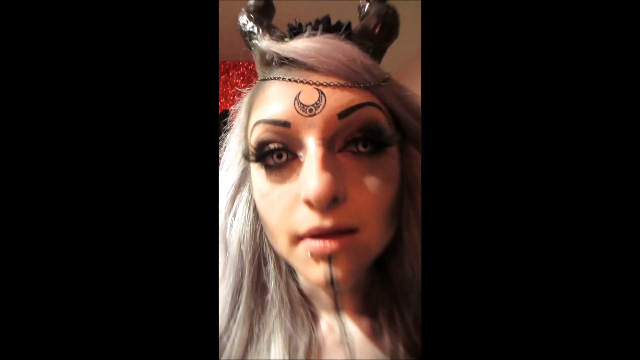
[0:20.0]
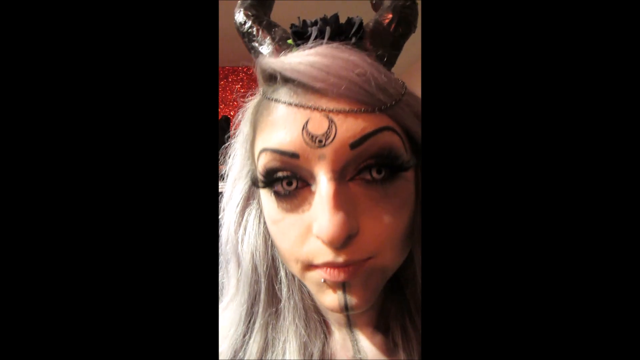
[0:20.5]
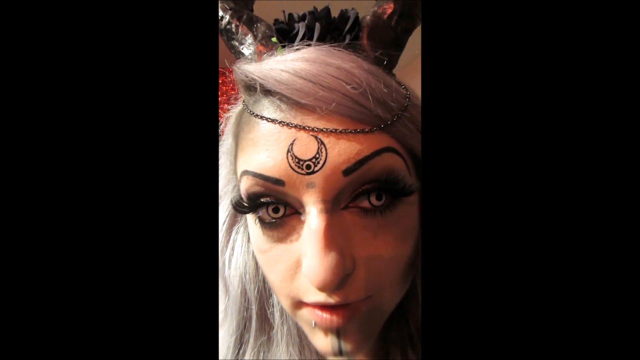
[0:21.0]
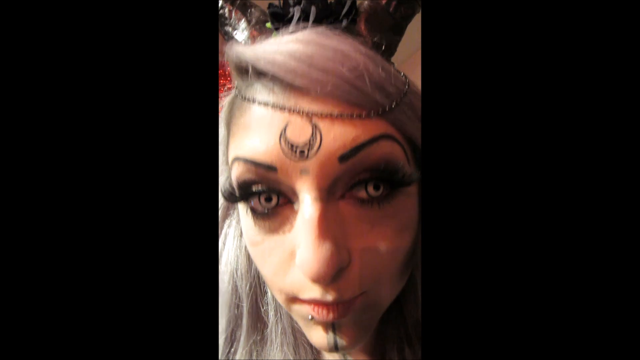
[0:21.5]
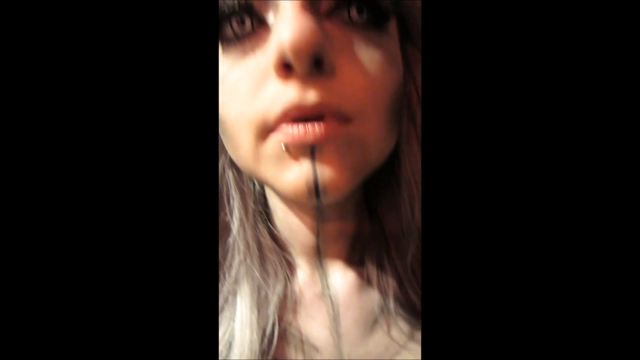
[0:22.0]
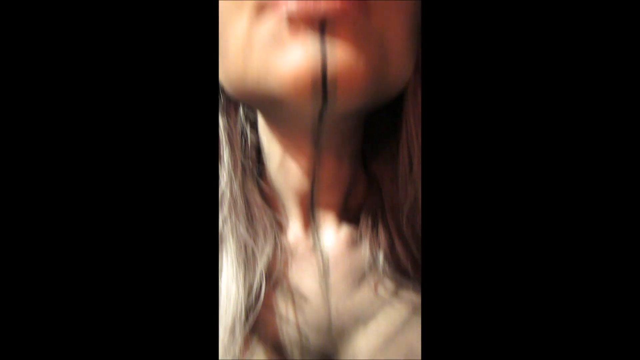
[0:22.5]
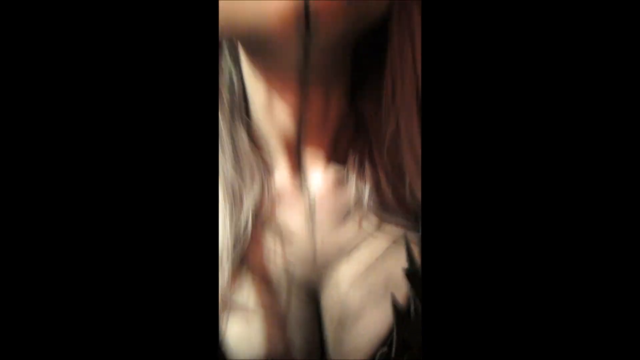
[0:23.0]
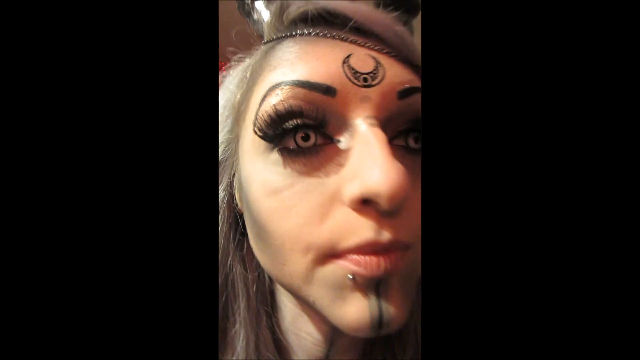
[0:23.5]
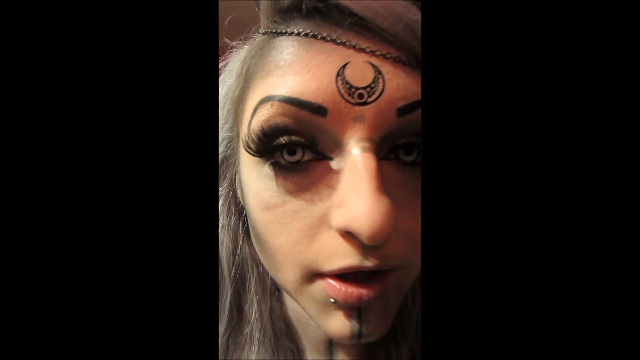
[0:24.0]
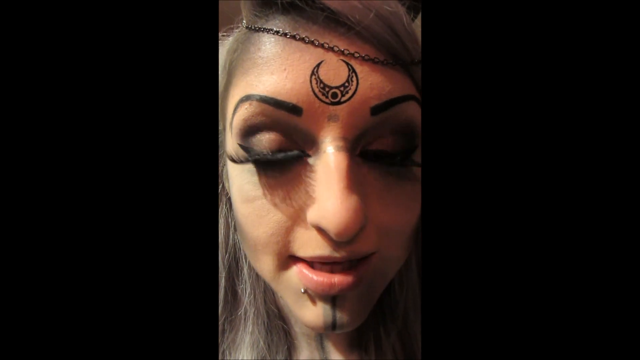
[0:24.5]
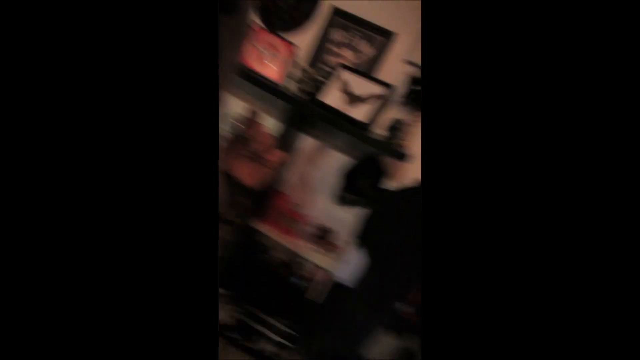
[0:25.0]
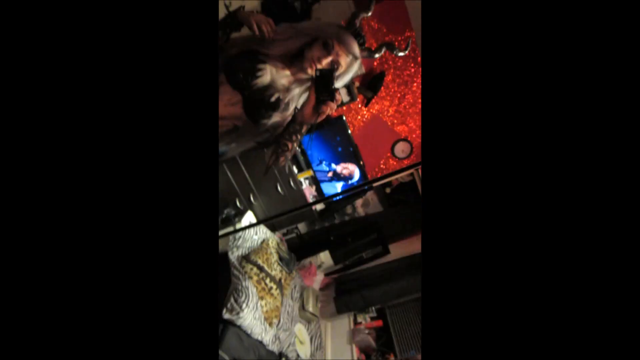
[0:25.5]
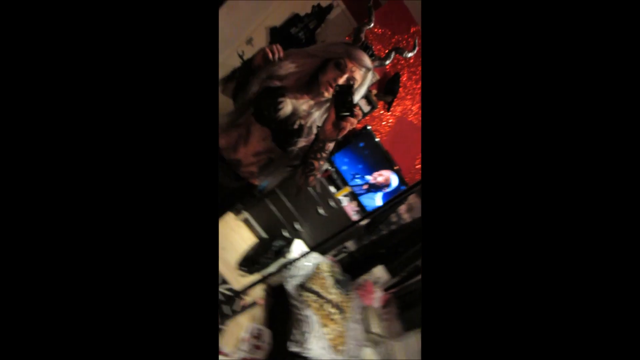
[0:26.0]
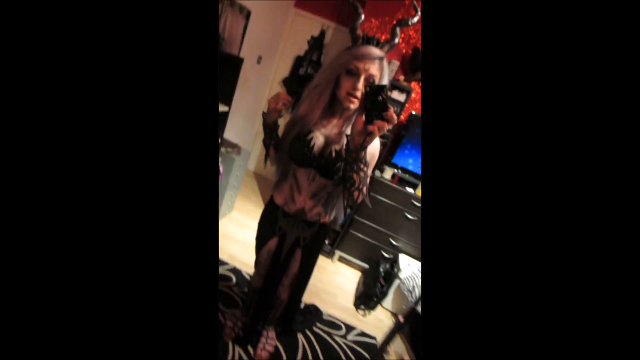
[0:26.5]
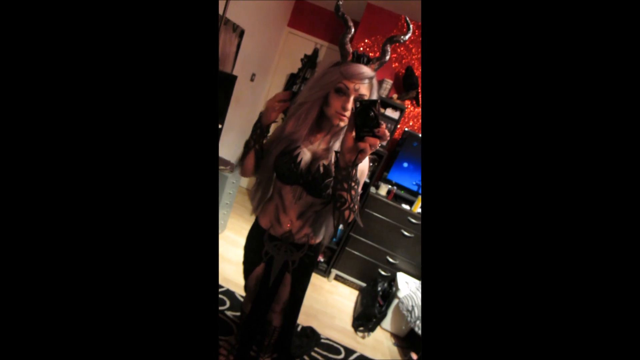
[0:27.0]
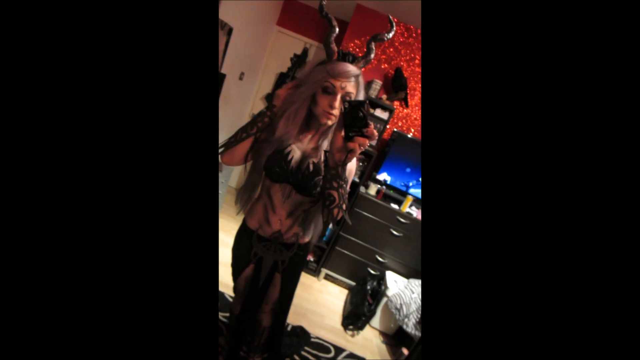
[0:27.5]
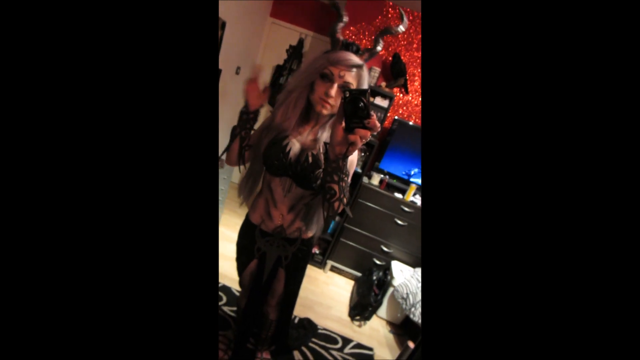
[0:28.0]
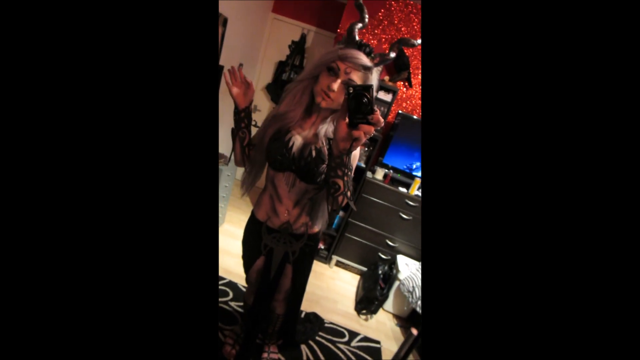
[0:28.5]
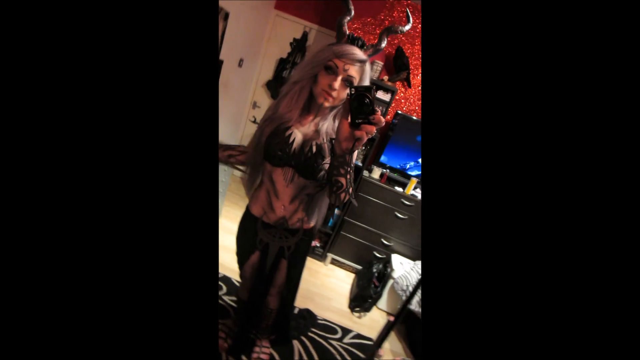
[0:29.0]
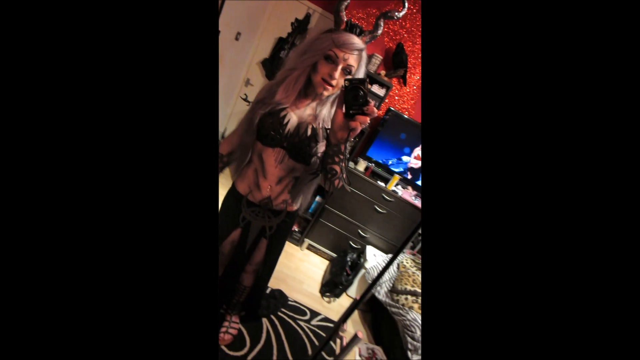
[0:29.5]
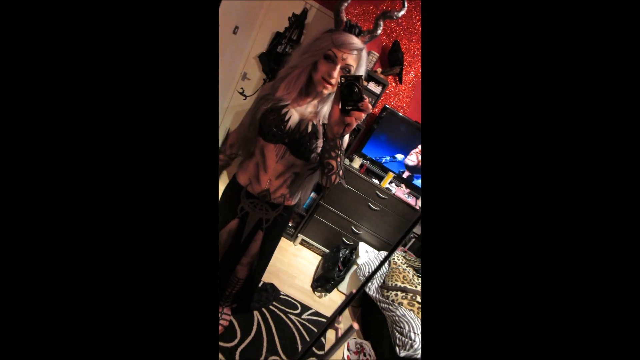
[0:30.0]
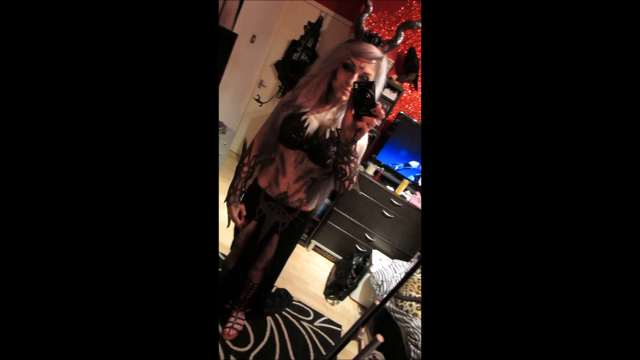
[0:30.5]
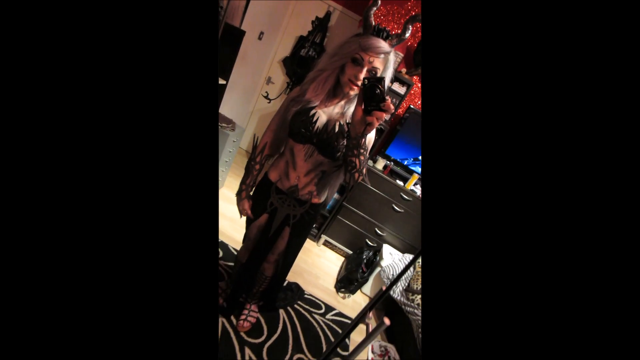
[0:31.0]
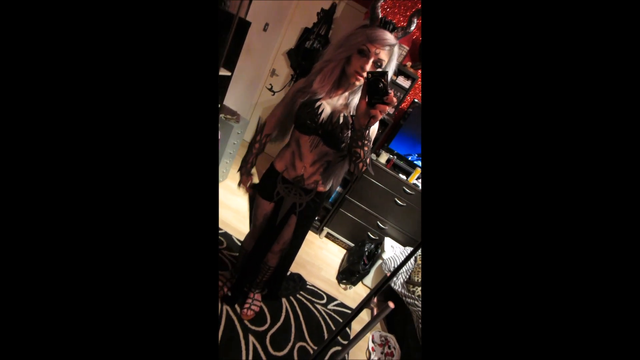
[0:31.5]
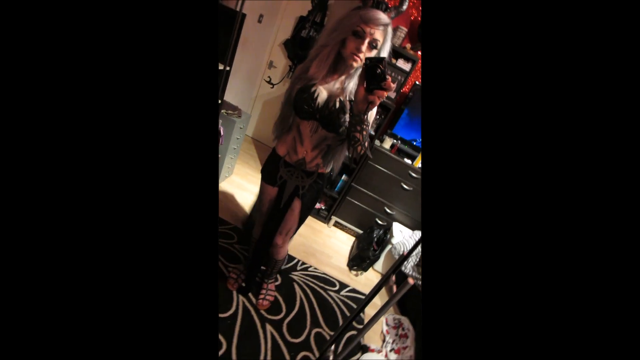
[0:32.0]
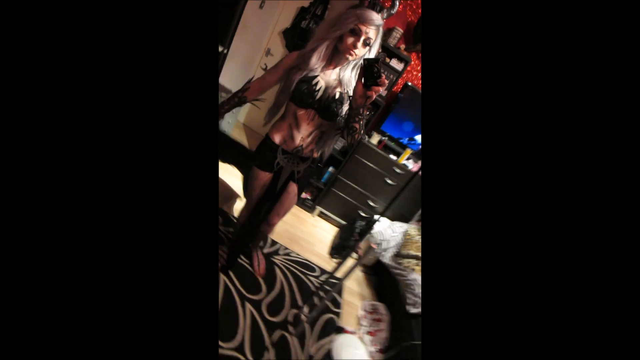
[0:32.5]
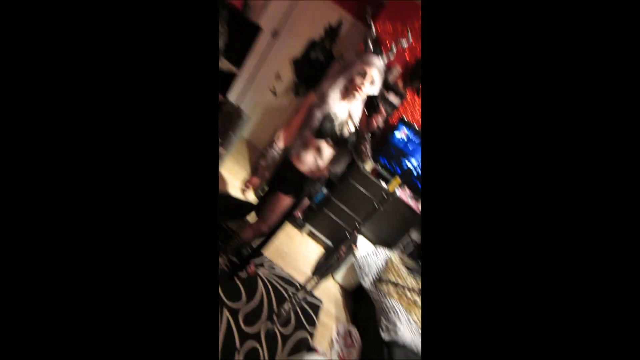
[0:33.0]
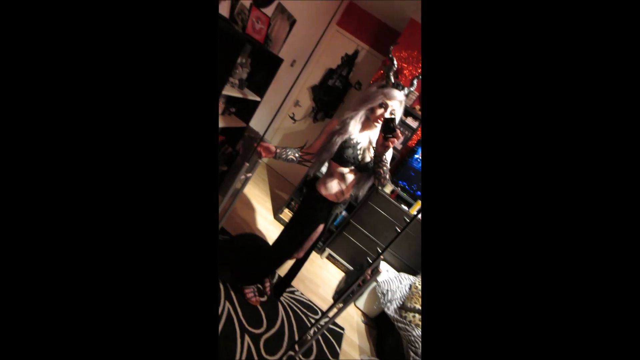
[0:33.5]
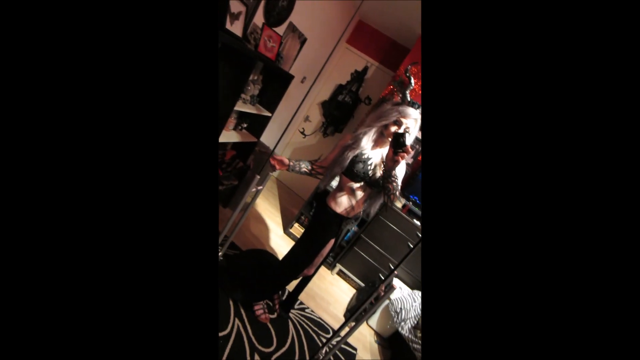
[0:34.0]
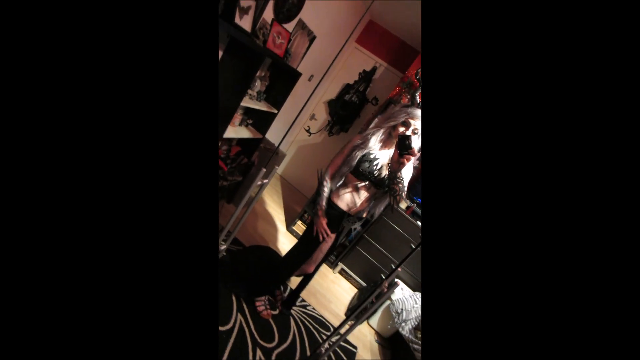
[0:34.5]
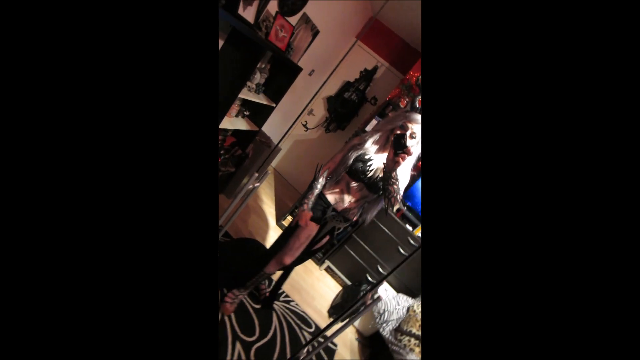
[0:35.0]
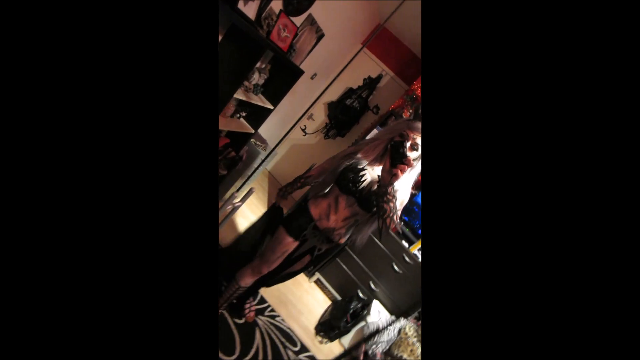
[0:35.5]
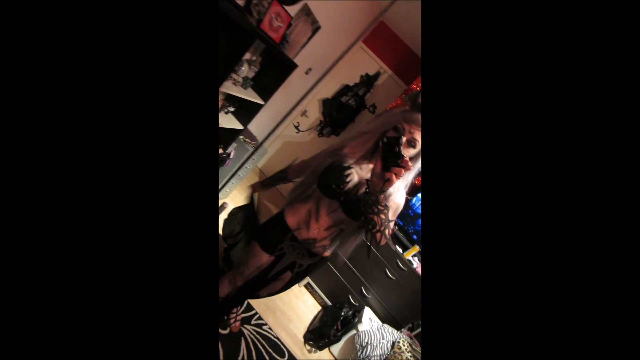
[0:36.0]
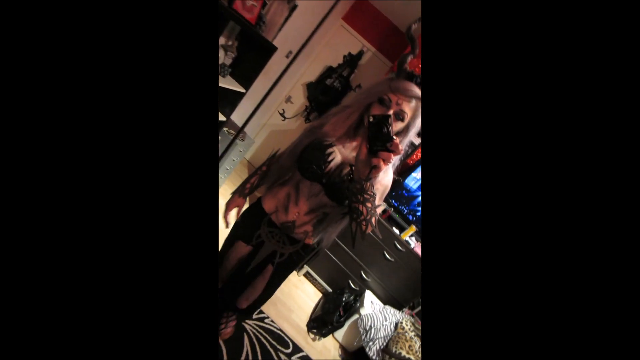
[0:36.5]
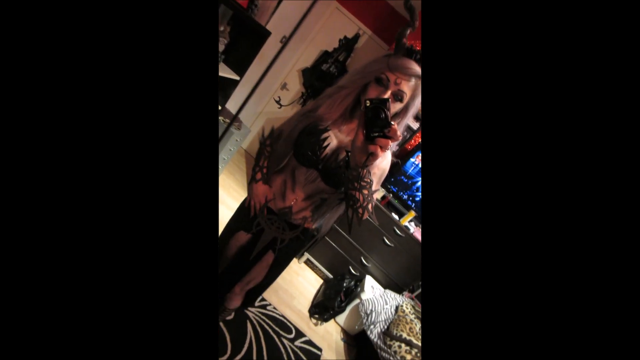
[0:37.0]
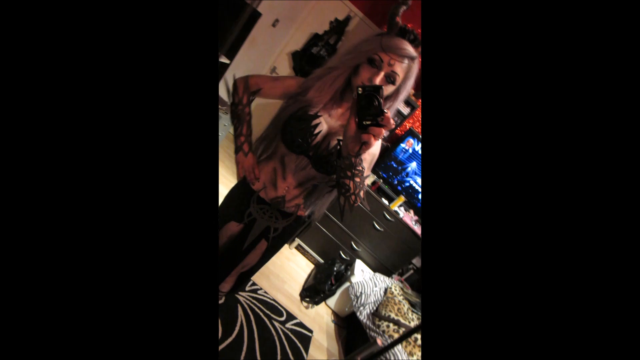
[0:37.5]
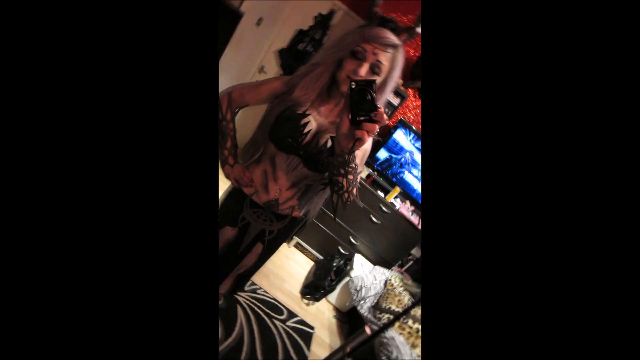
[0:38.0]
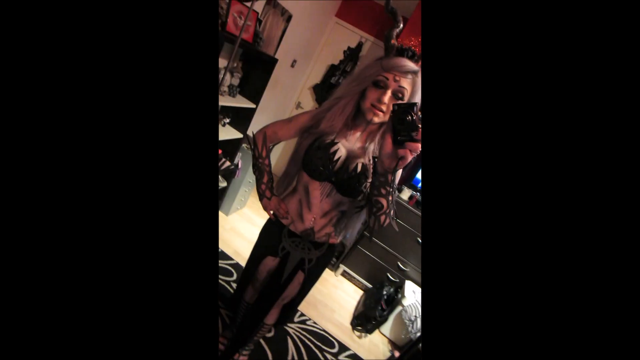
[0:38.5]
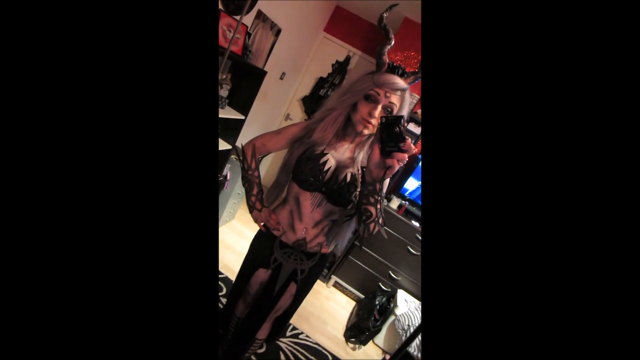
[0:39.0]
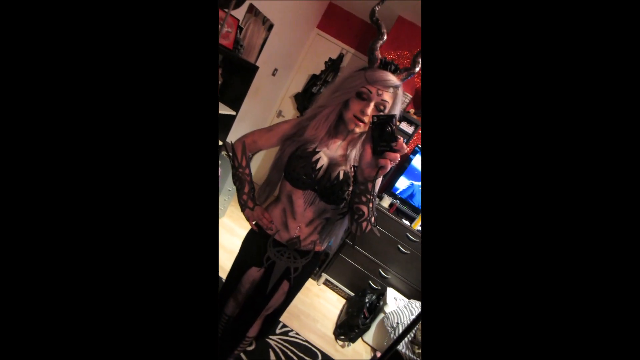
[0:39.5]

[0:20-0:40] The video shows their eyelashes and contacts, and they show off the black line running down from their chin to their chest or stomach. Then what appears to be a mirror view shows them holding their phone in the mirror and displaying their outfit. On the left-hand side, their hand waves. The background is messy: a TV is on in the right-hand corner, there is a desk with a bunch of stuff on it, and also in the right-hand corner there is a bed with leopard print pillows. They move to the side and show a kind of cape or drape part at the bottom of the outfit as they rotate to the left. To their left is a shelf with what appear to be skulls on the top shelf, plus cups and maybe glass bottles. At the very top of the shelf there appear to be at least two picture frames, and the one on the left might be a skull item.